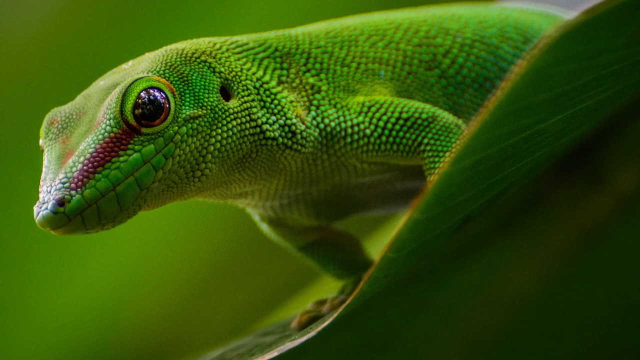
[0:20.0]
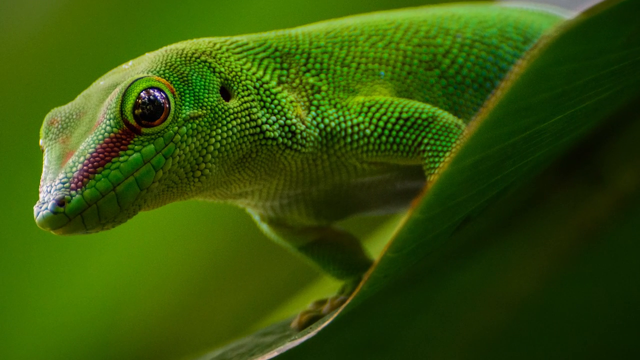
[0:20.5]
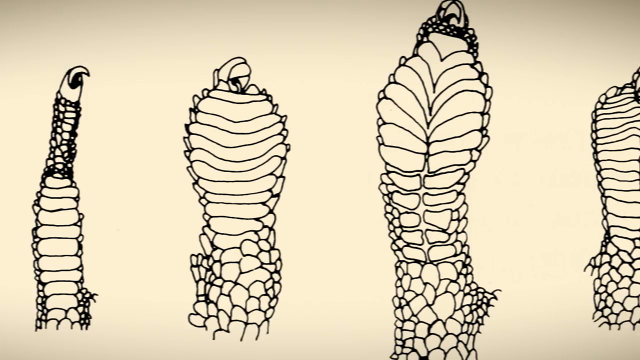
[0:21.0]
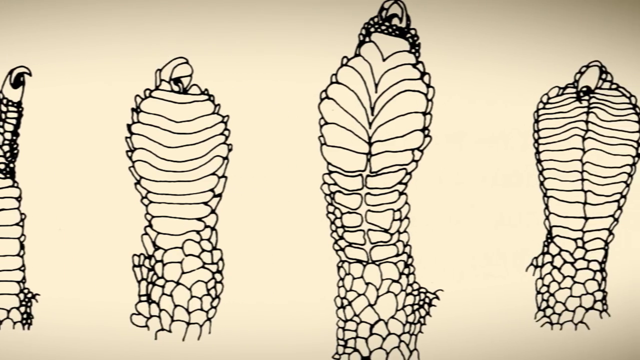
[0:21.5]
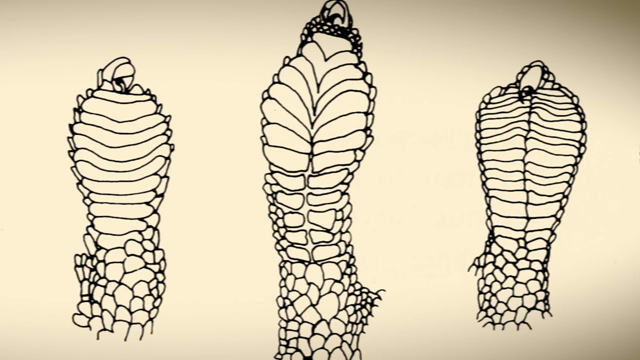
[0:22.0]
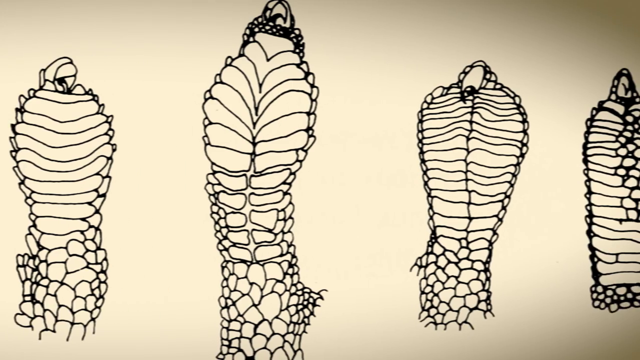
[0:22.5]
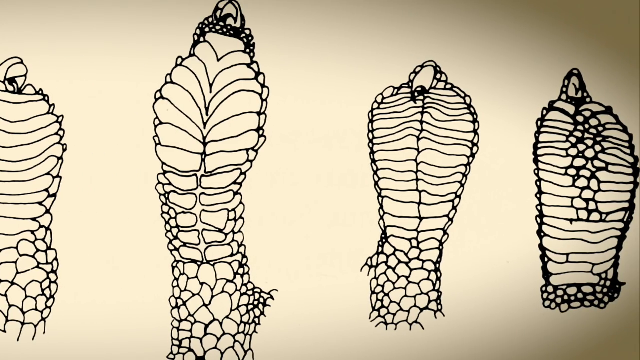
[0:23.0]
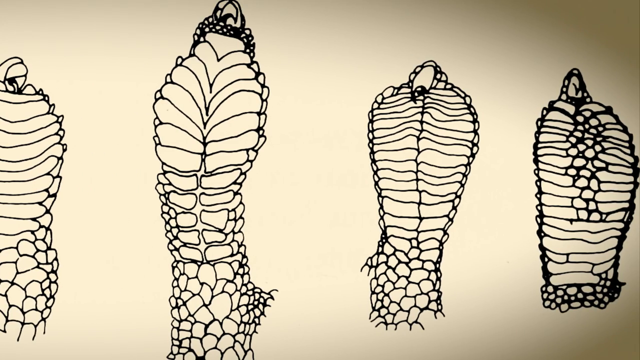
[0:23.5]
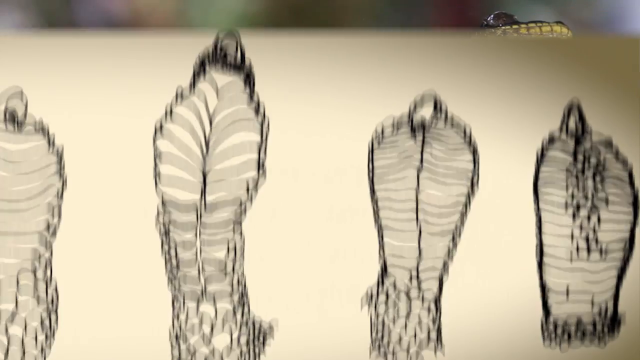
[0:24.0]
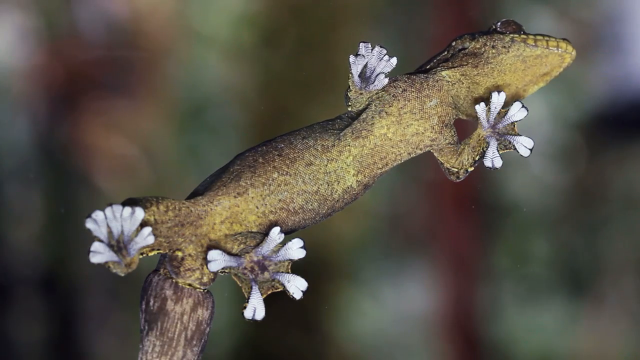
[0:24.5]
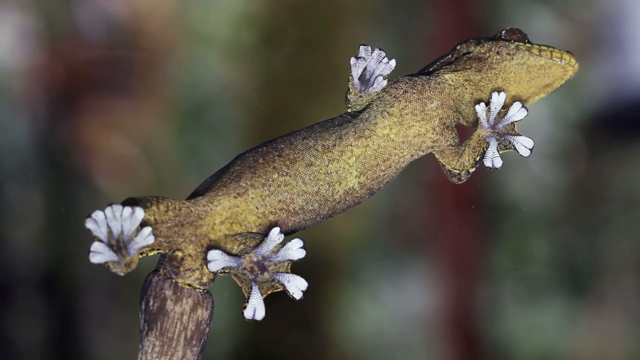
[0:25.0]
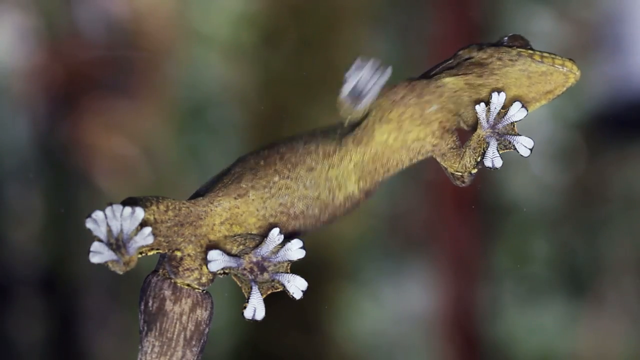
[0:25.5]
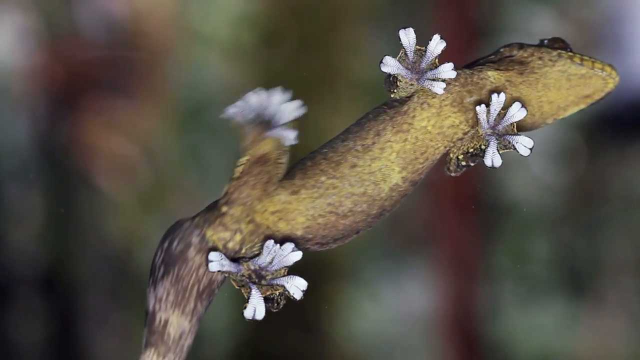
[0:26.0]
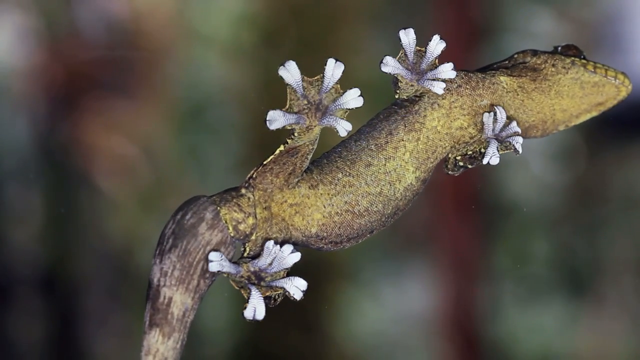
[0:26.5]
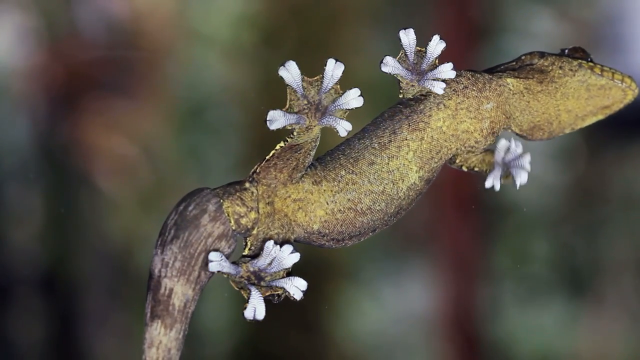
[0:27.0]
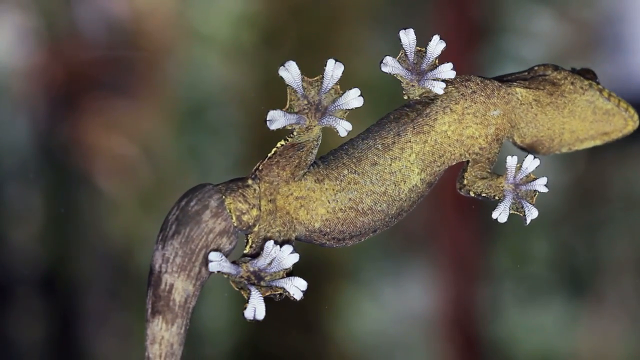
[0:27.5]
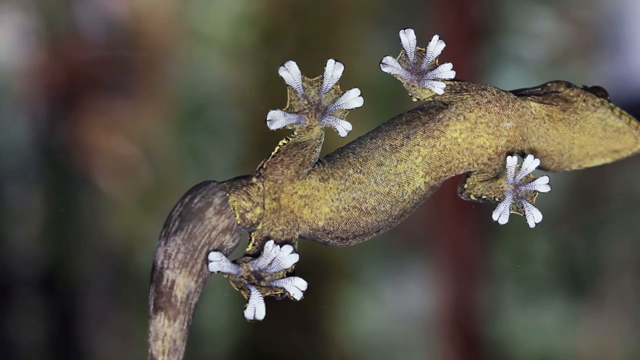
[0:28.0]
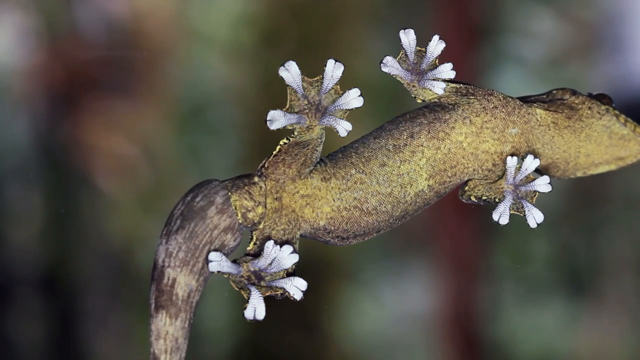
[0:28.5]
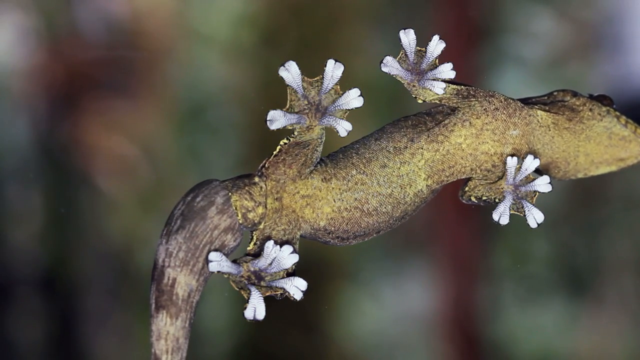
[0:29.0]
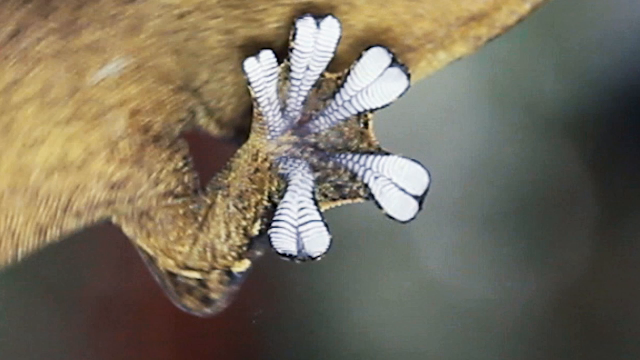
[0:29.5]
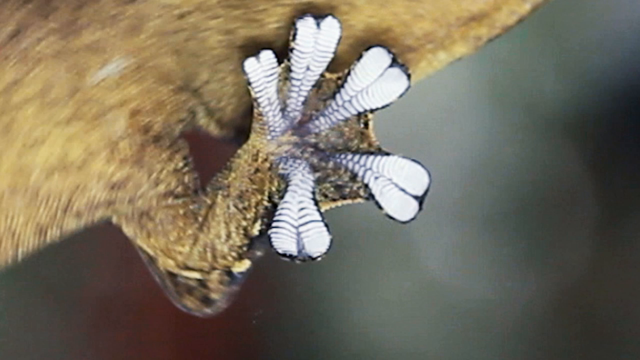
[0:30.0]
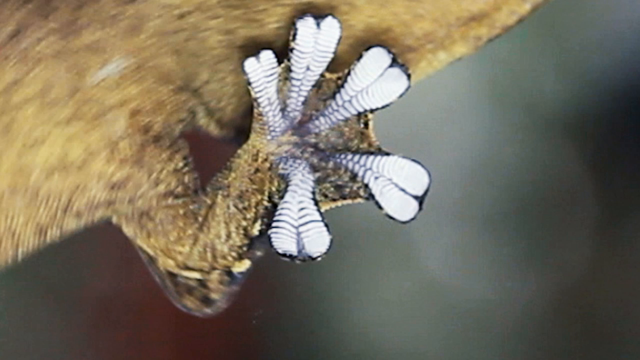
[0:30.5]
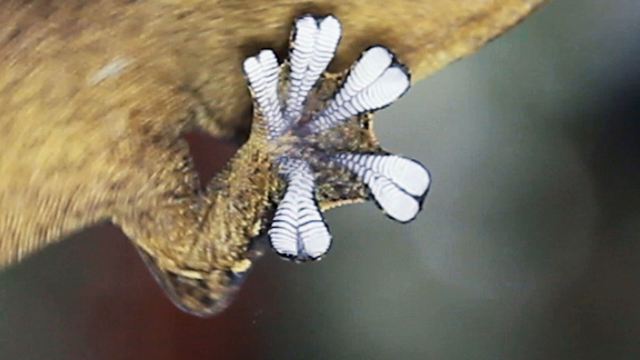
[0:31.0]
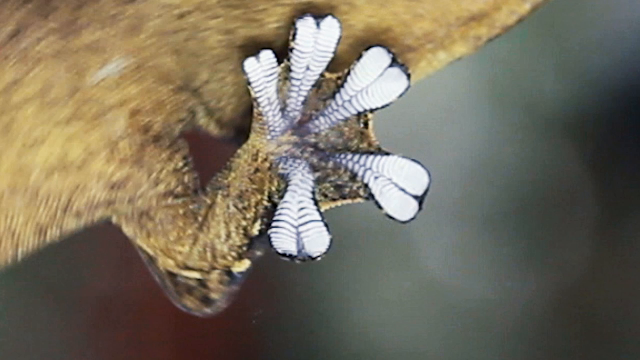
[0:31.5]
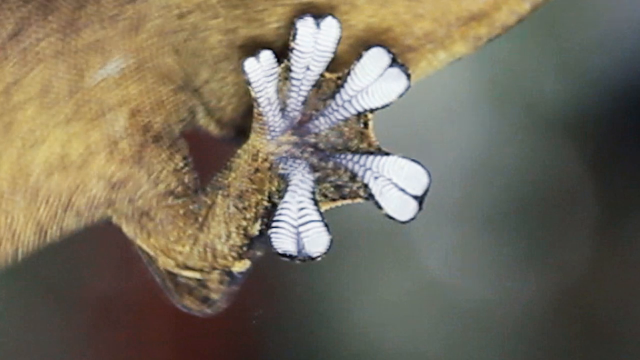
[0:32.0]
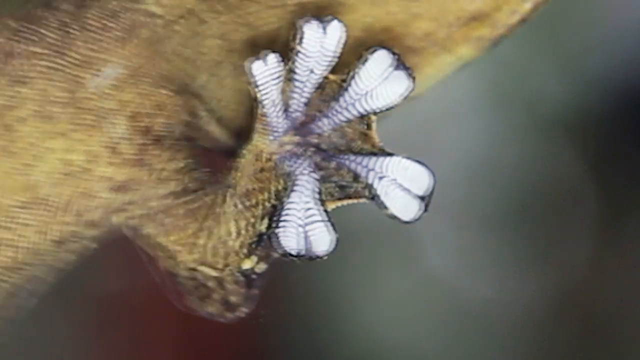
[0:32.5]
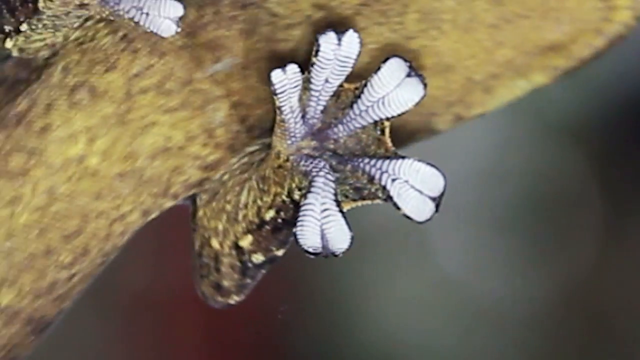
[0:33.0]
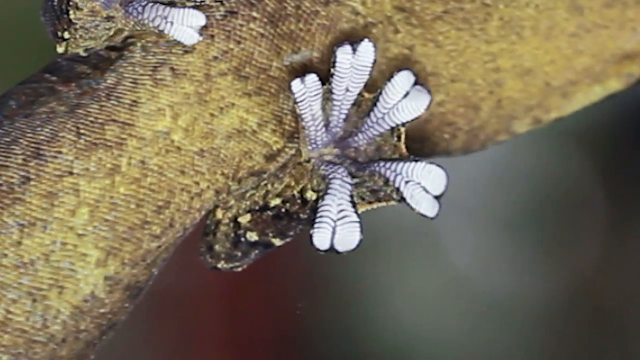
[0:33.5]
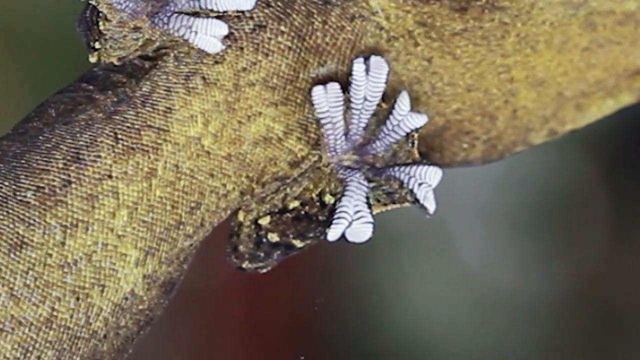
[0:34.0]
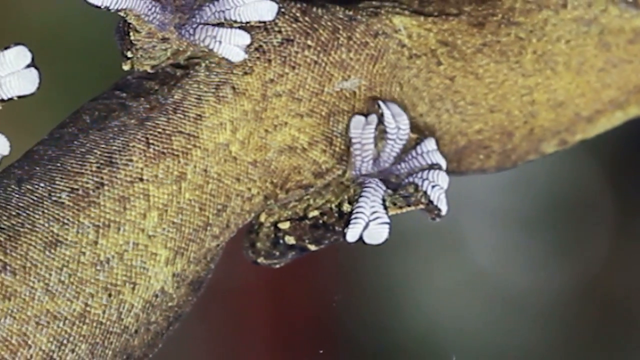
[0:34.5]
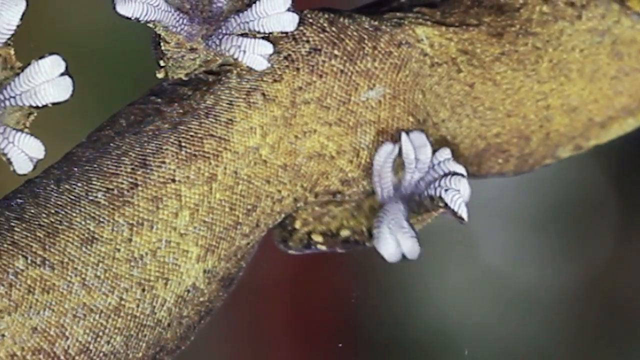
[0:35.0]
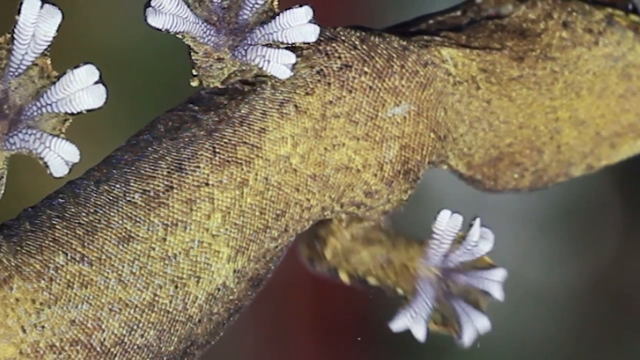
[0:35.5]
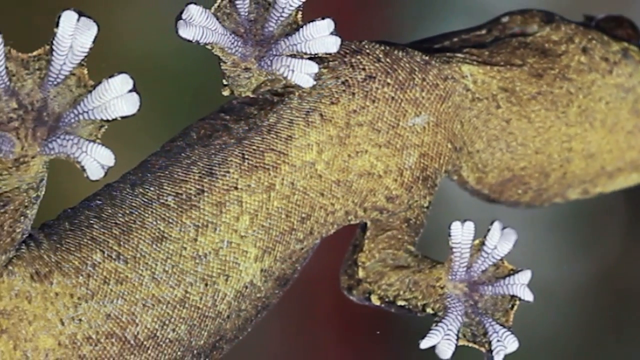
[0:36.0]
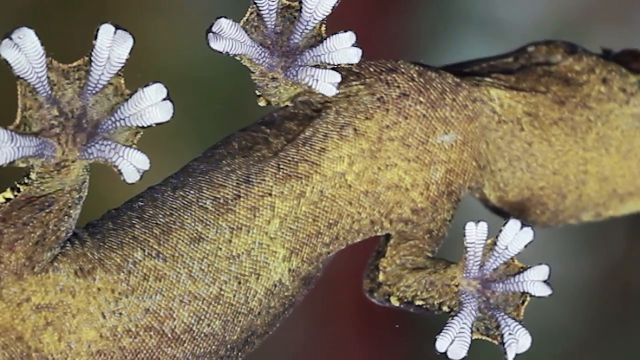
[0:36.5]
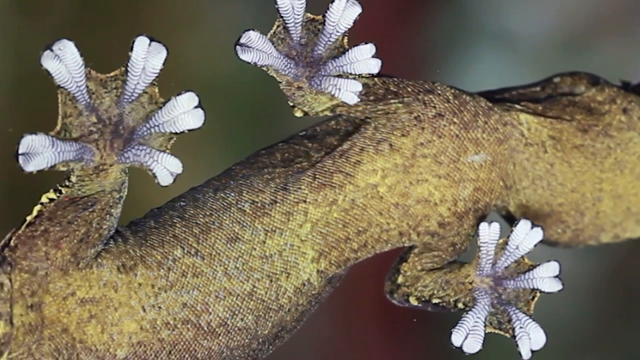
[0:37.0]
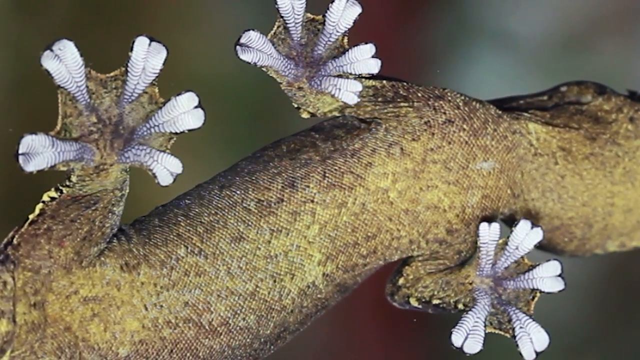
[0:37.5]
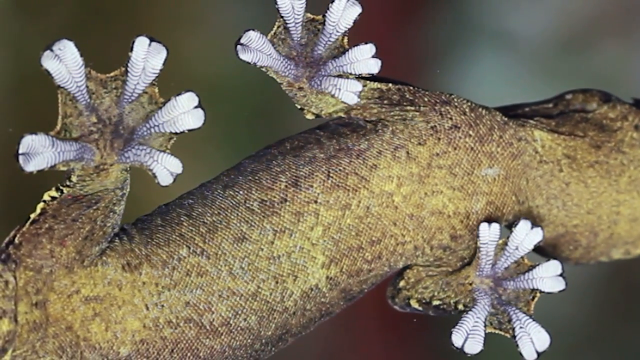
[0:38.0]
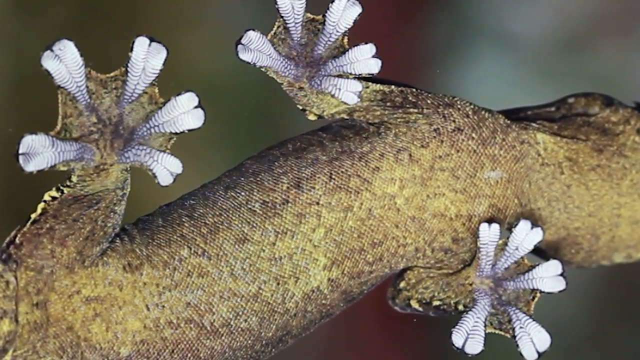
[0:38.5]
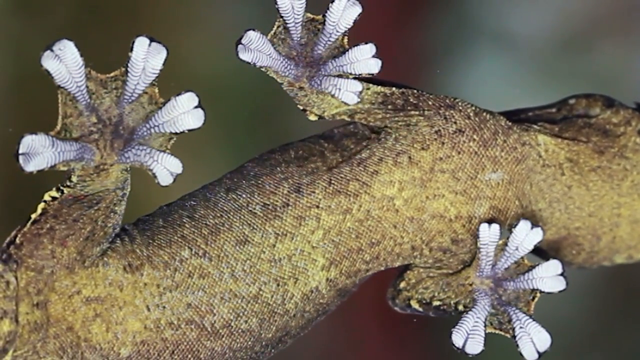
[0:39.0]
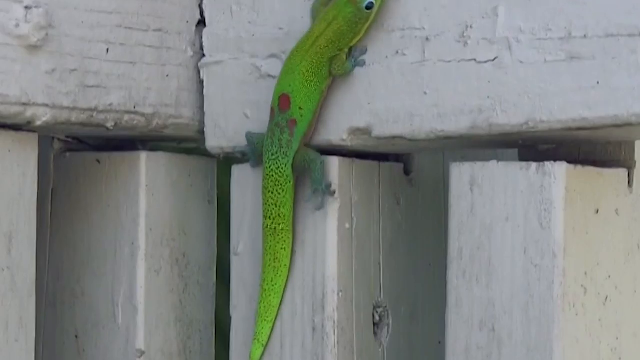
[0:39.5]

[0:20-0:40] An up-close shot shows a green lizard standing on a green leaf, its scales visible and its face very close to the camera. A white stripe on the left side of its nose runs from the tip of the nose all the way up to its eye. The video cuts to a drawing of what looks to be fingers or arms of lizards; the view starts at the left and pans to the right, showing different sizes and different lengths. Next, a lizard is shown from underneath while it is on glass. Its stomach is light tan and its body is dark brown. Its four feet have five fingers and toes that are spread out and white and look like suction cups, and it slowly crawls off the screen. The video then cuts to one of its feet up close, where each of the white toes is made up of two separate toes.